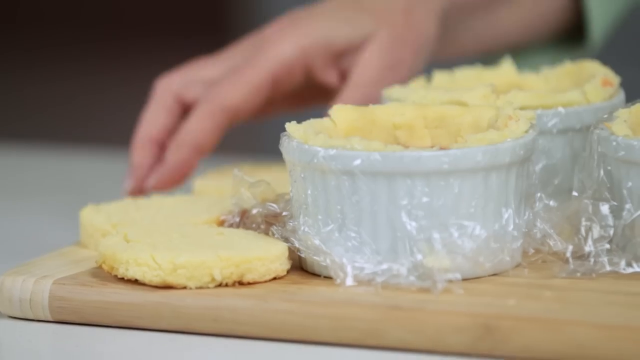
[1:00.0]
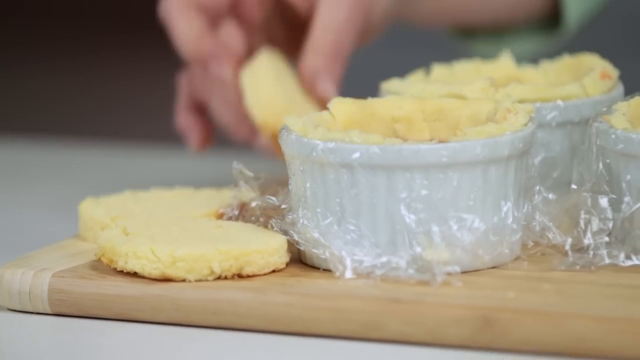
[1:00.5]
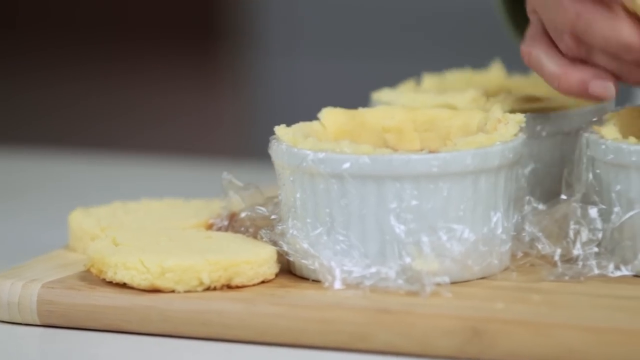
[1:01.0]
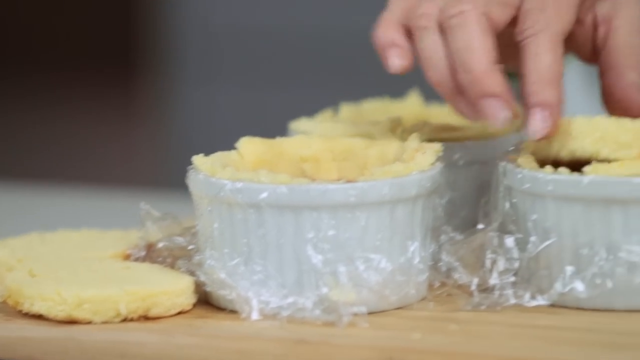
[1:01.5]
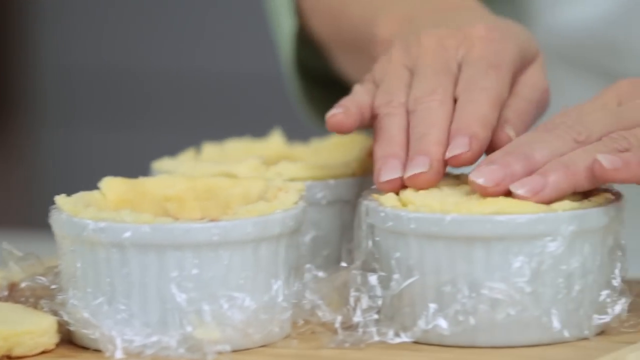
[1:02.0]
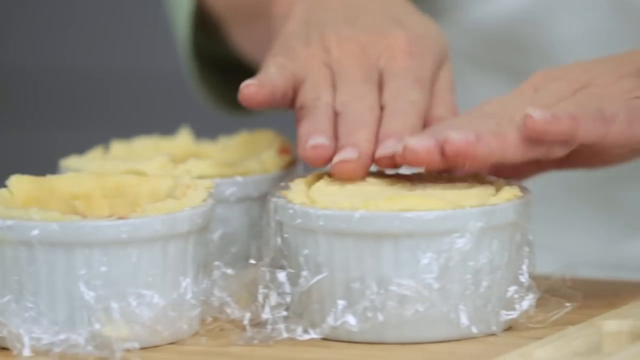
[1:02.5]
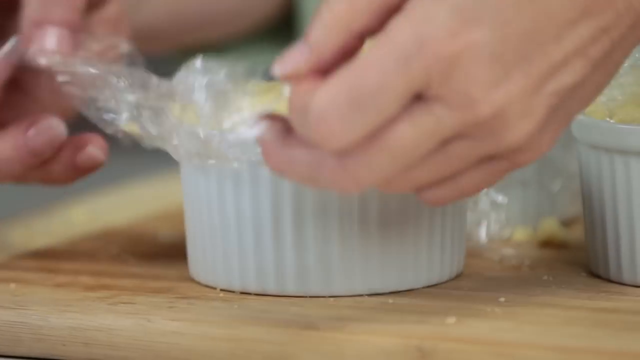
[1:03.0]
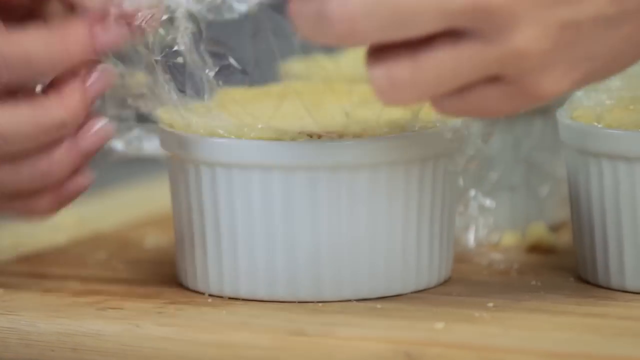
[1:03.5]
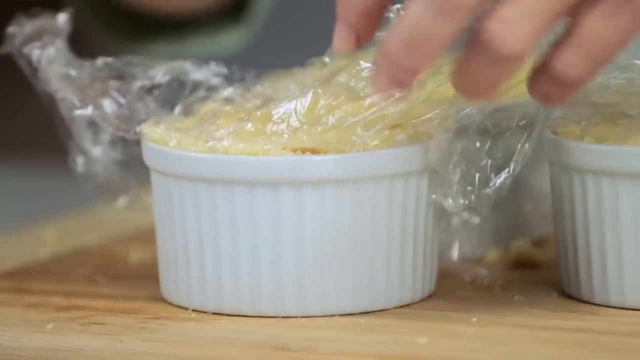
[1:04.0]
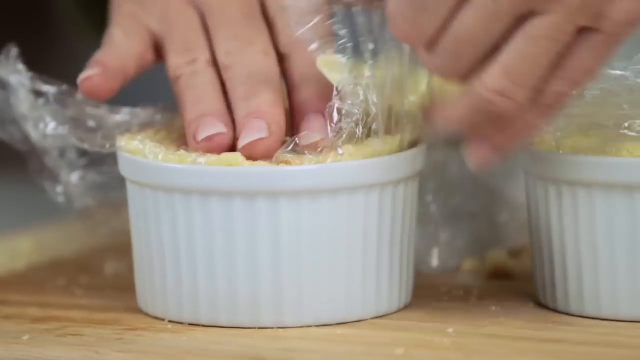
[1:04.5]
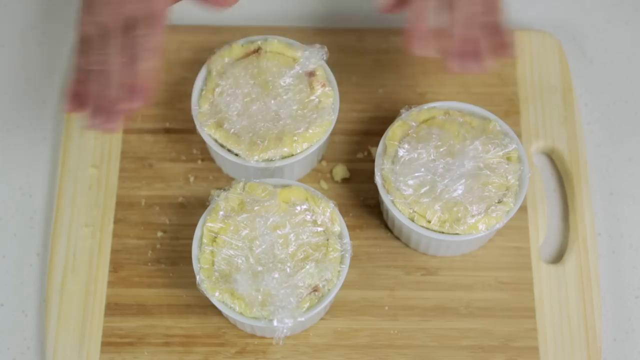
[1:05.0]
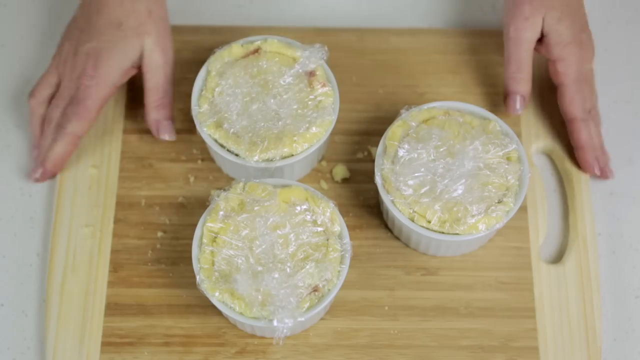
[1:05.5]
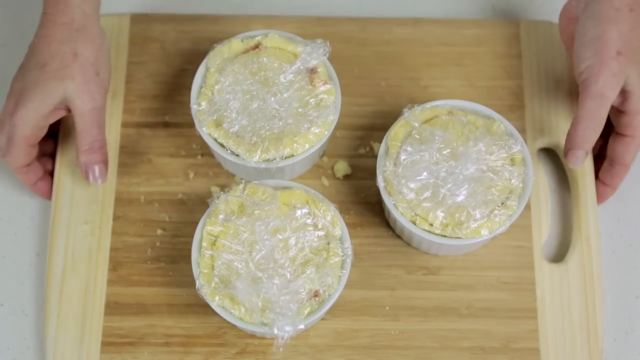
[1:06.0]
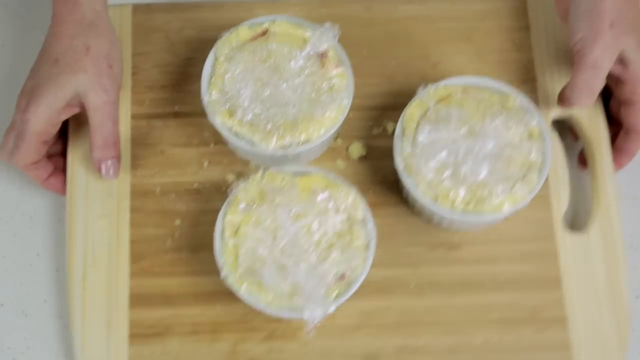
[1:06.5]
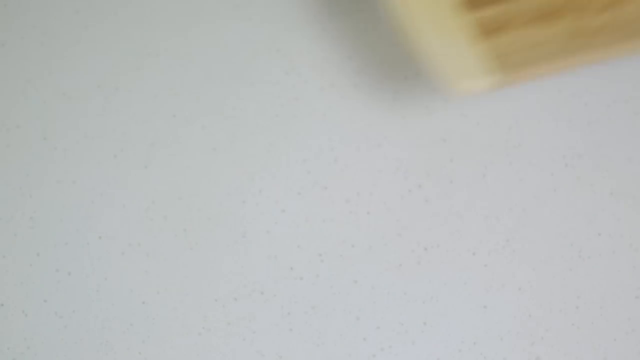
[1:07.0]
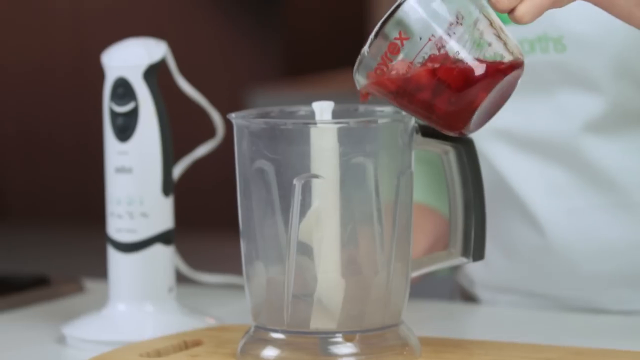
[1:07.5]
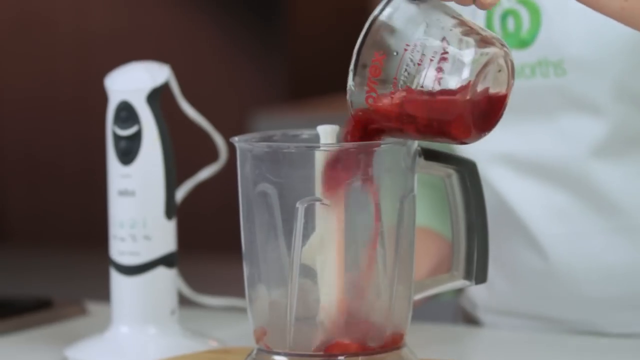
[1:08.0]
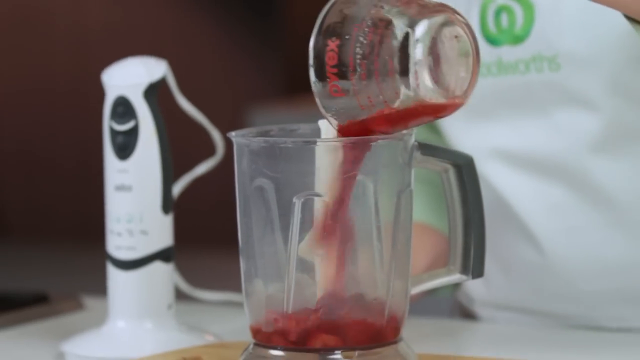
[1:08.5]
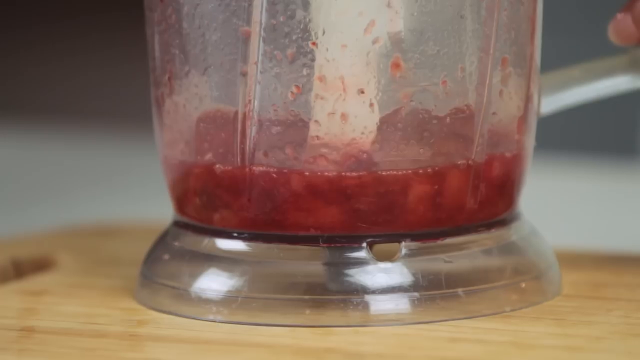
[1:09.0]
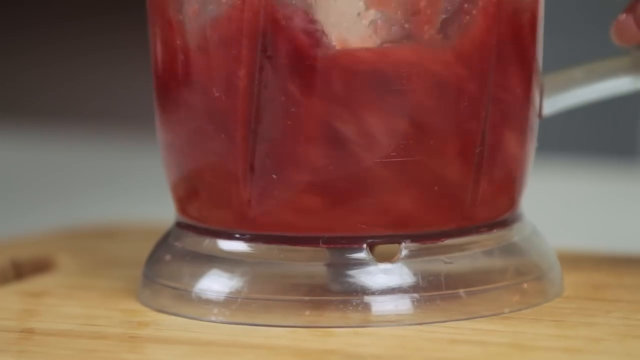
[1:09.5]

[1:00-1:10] Ramekins are lined with bread on the inside. A circle-shaped piece of bread is put on top of a ramekin, which is then covered with saran wrap. Three identical-looking ramekins are on top of a wooden cutting board, and the person lifts up the cutting board. The video cuts to a measuring cup full of what looks like strawberries and some red liquid being poured into a blender, then cuts to the blender's blades blending the strawberries along with the liquid.